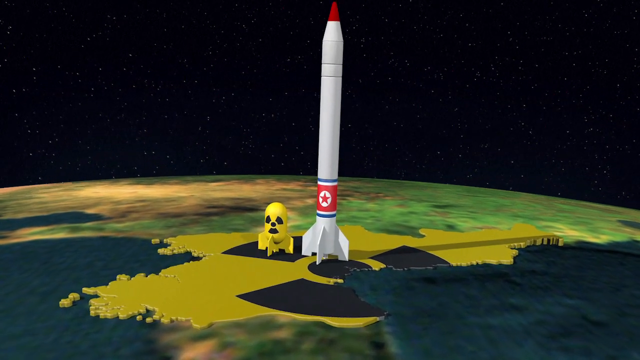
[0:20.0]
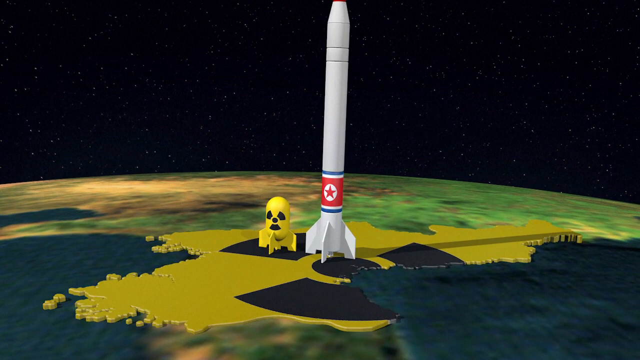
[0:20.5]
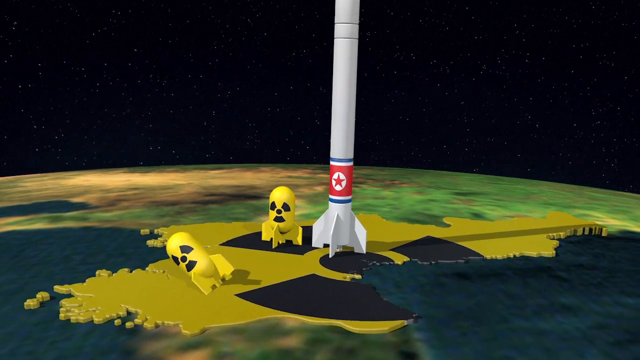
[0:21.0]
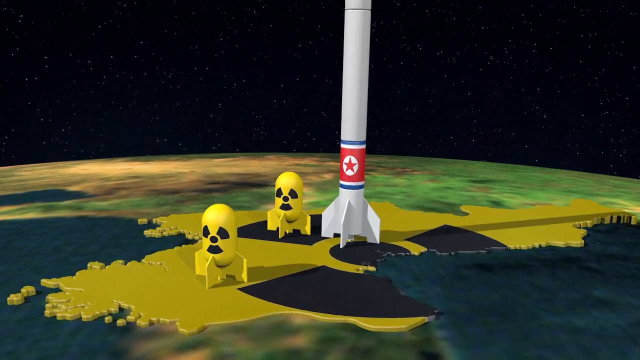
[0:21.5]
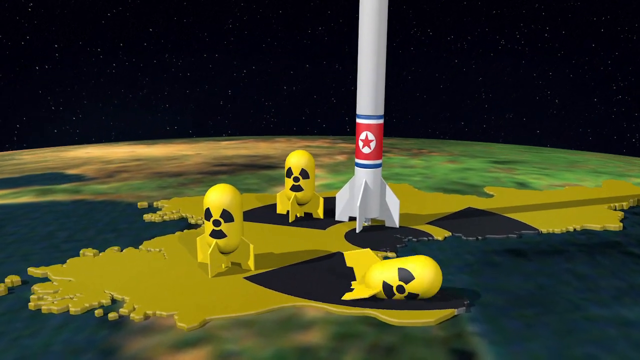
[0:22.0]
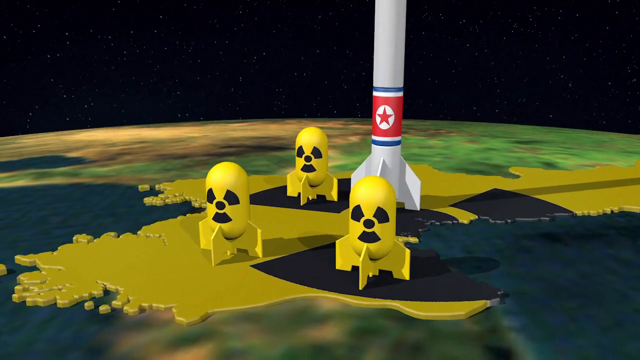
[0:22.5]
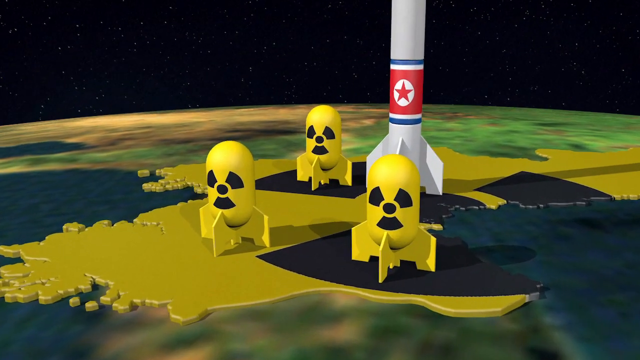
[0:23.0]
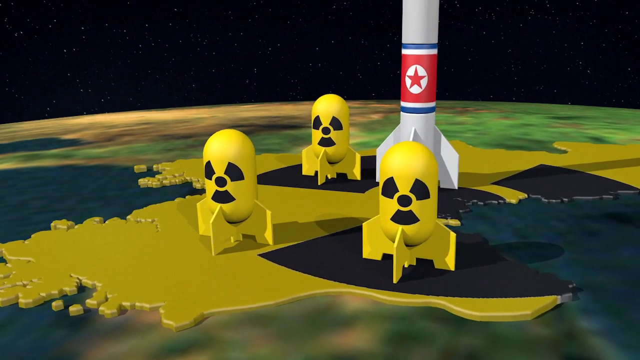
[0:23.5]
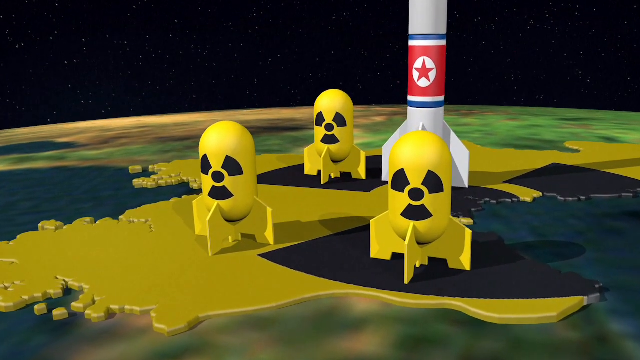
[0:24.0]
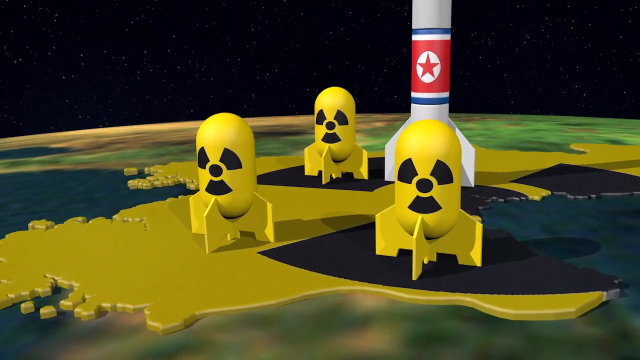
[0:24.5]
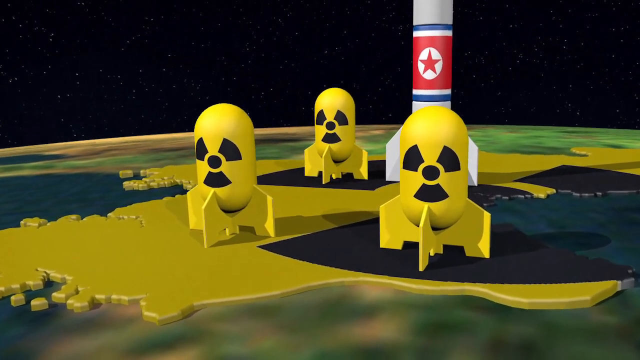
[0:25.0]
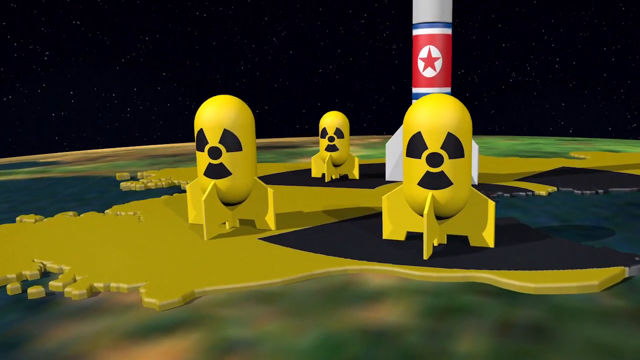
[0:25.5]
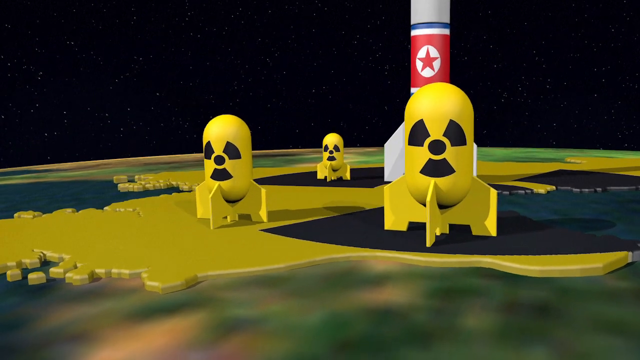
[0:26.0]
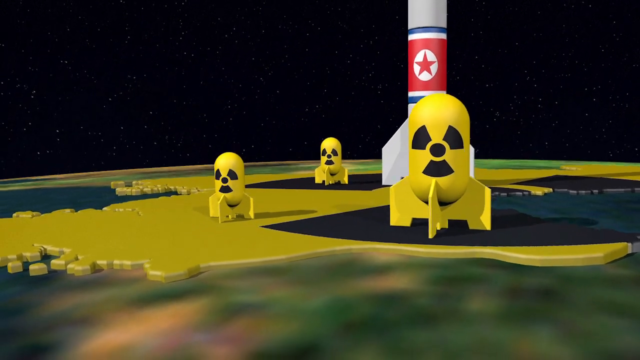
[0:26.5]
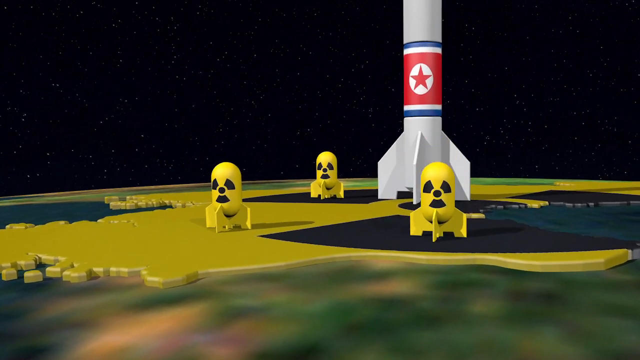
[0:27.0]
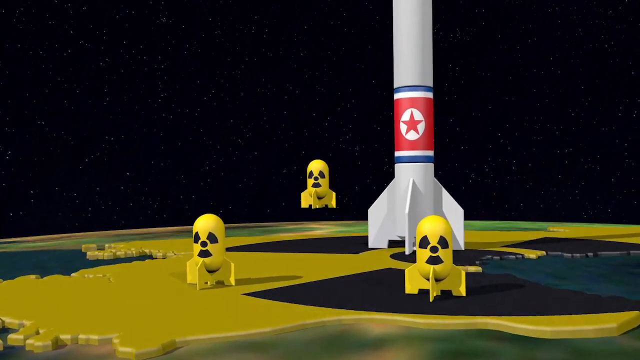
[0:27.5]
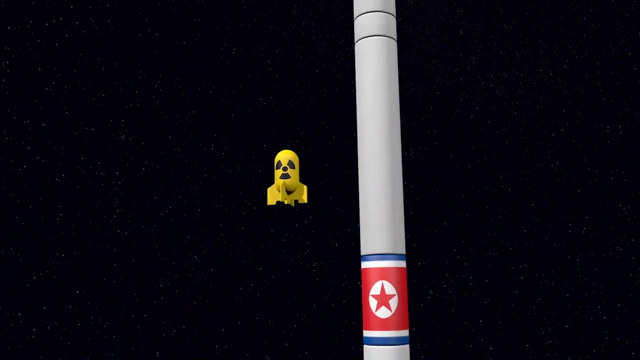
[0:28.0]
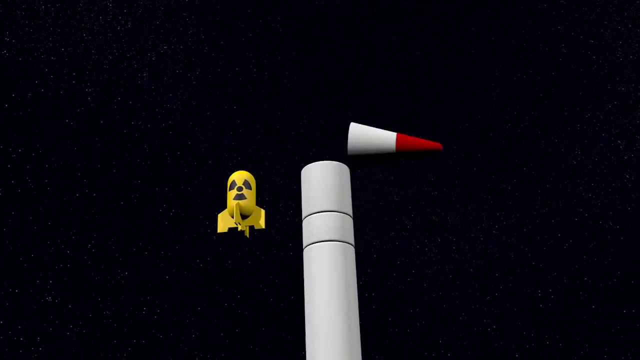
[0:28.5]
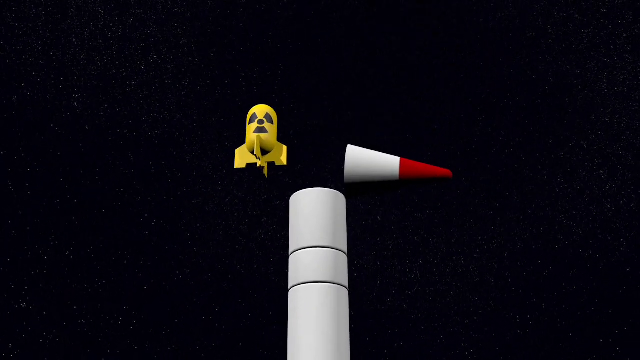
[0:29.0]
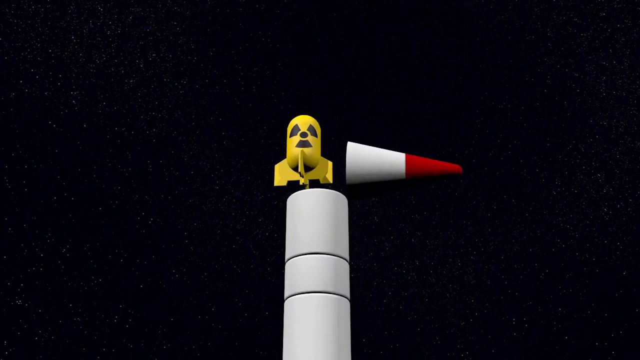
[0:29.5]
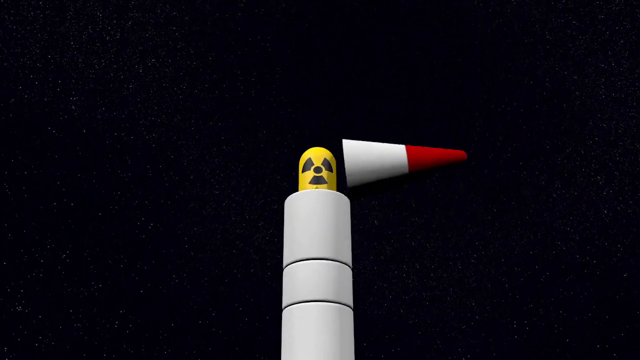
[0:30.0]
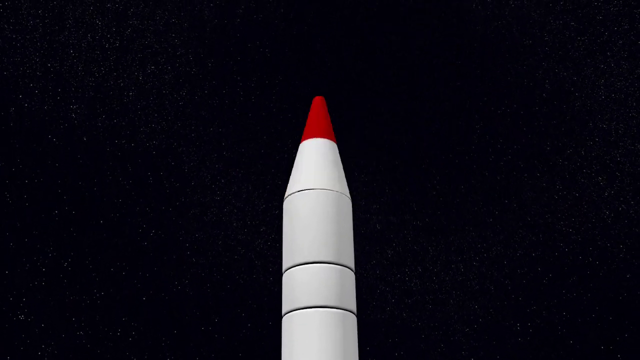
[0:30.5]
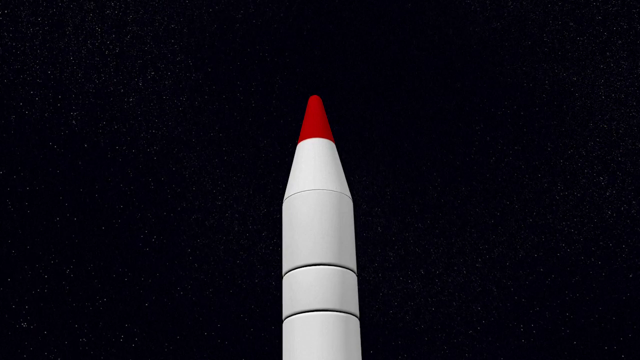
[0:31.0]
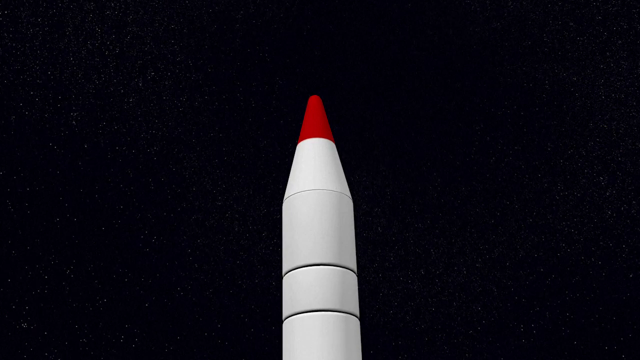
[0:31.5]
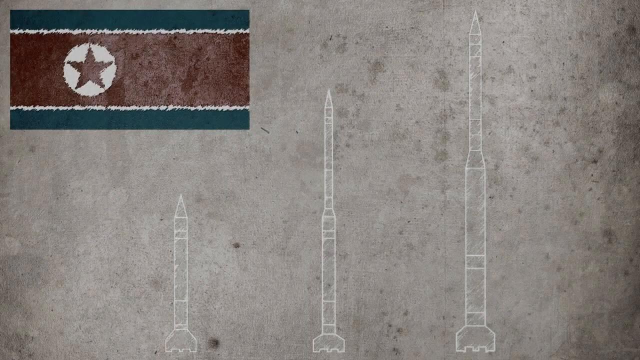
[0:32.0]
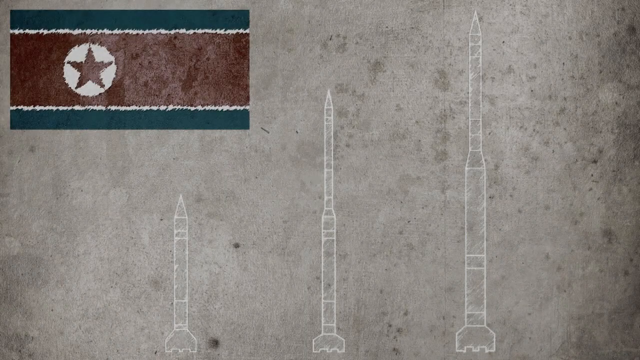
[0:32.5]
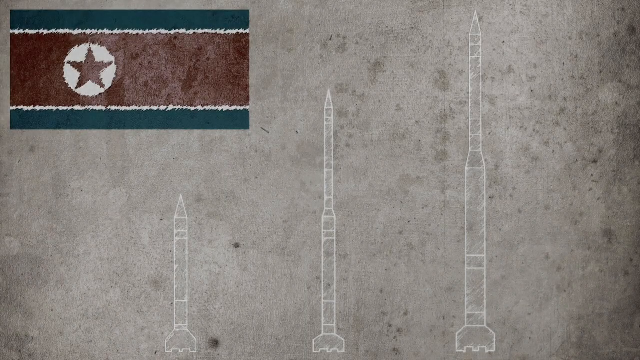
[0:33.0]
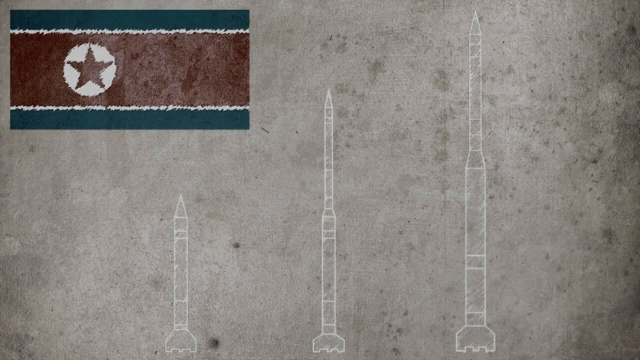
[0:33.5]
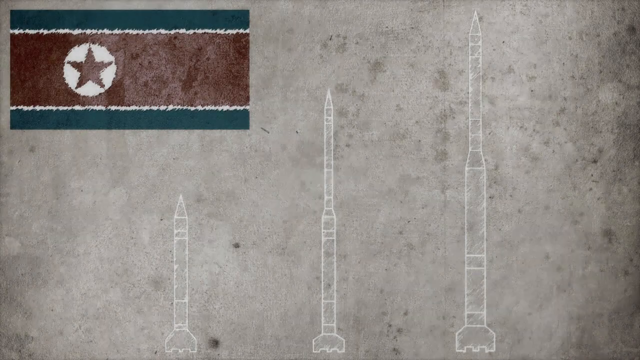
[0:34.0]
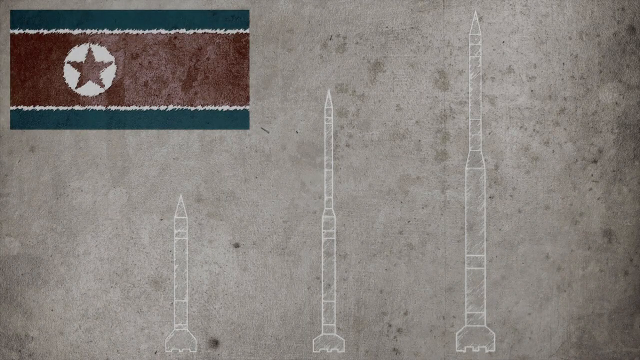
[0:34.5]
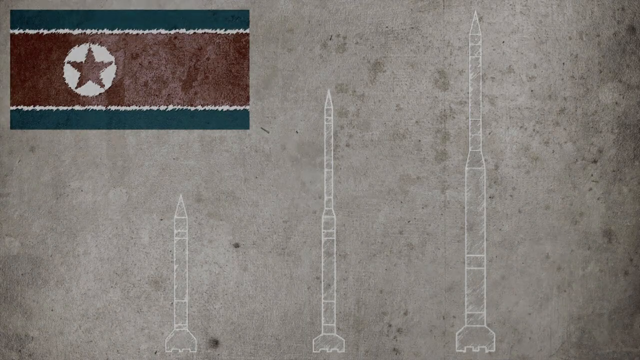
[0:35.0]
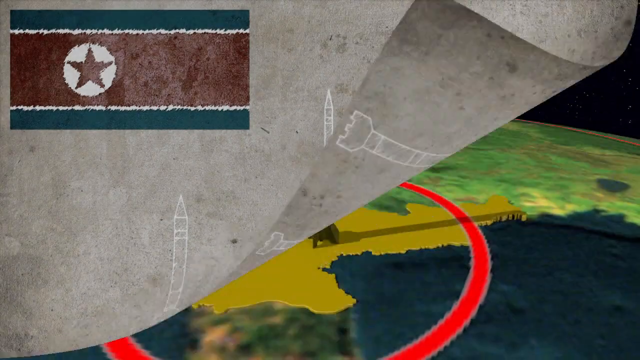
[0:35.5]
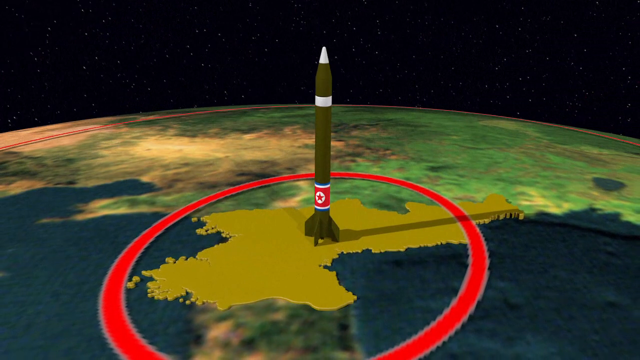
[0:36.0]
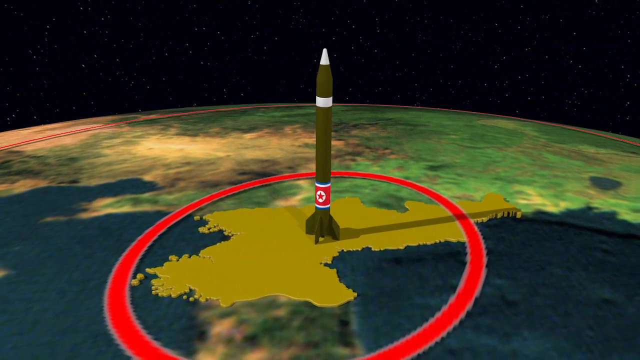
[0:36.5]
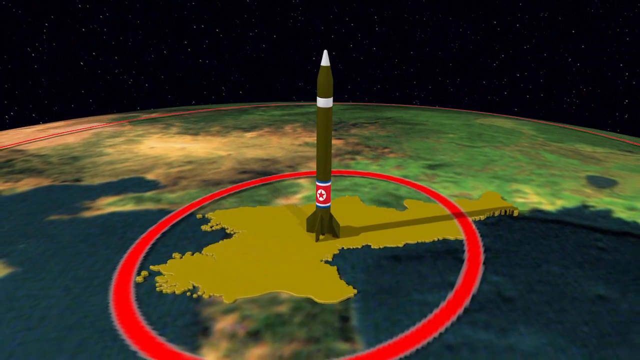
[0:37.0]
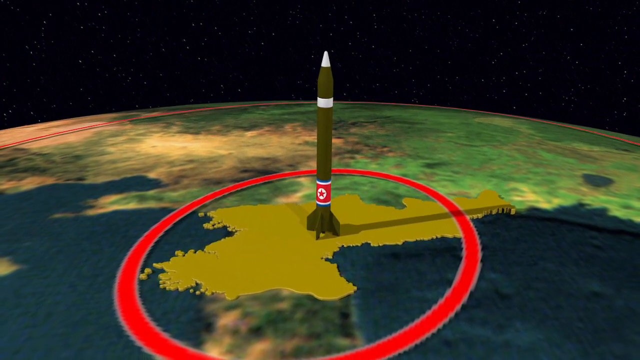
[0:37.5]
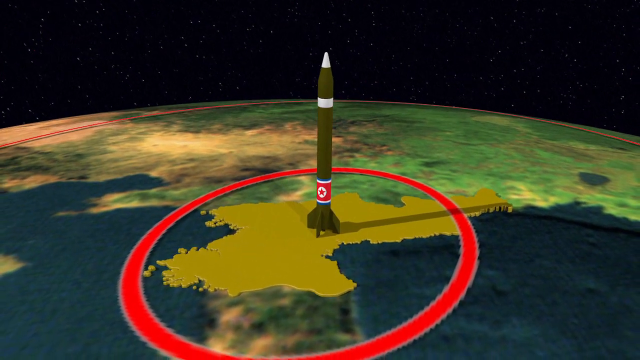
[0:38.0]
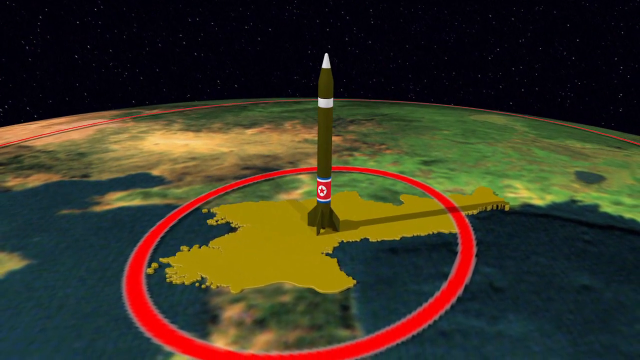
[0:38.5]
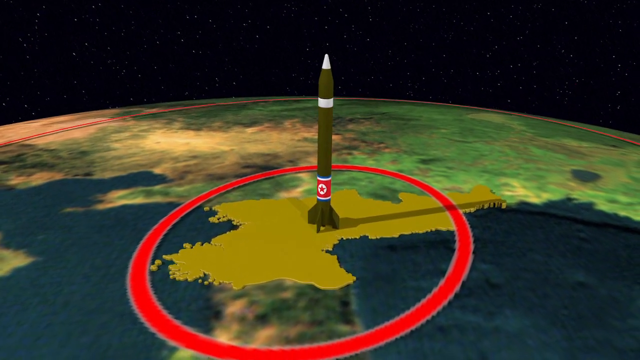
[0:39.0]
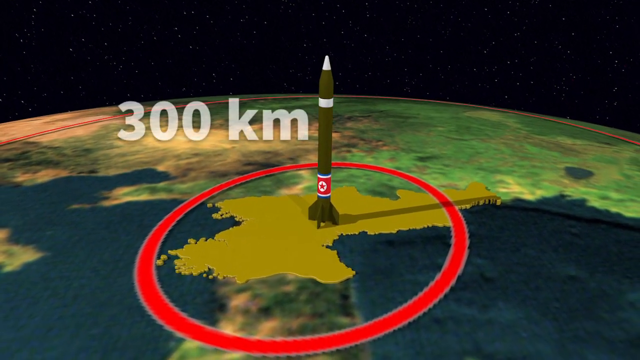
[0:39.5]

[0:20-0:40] The cartoon bombs and rockets remain in view as the zoom continues. Another yellow cartoon bomb appears, then another, making three, representing North Korea's nuclear bombs. The bombs shrink and go up into the sky, and one nuclear bomb is placed into the large rocket, which is skinny and white with a red tip. Various rockets in three sizes are shown, in a grainy, cartoonish-looking style. On the side is what appears to be the flag of North Korea: blue or blackish on top, red in the middle, with a red star surrounded by a white circle. The rocket turns green with a white tip, and the south of North Korea is surrounded by a red circle marking 300 kilometers.